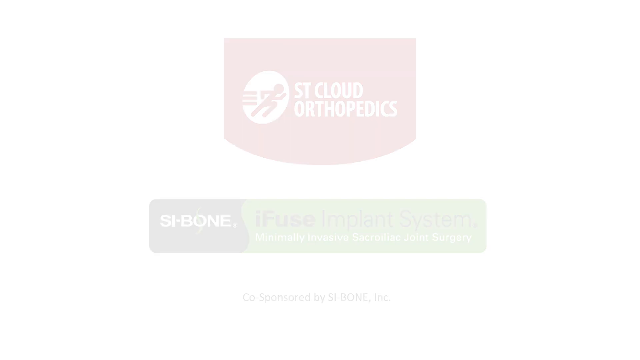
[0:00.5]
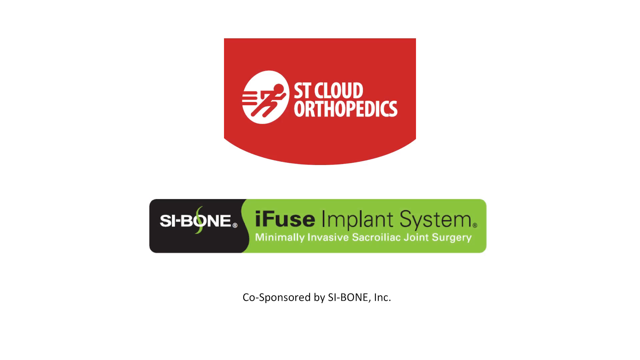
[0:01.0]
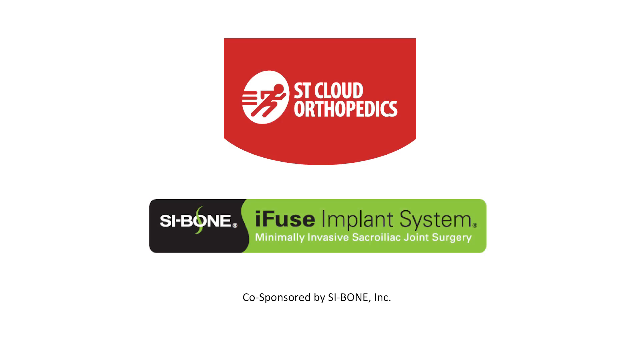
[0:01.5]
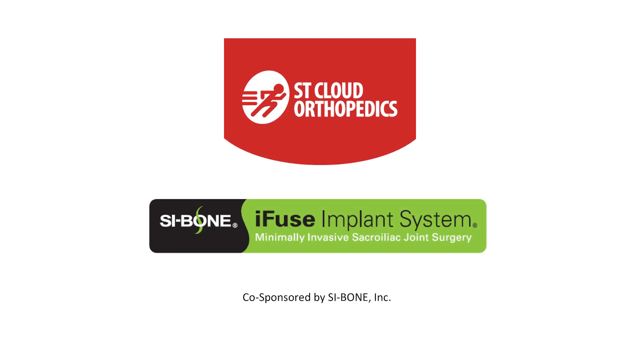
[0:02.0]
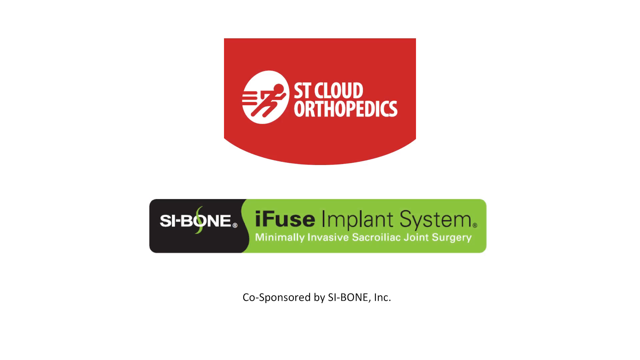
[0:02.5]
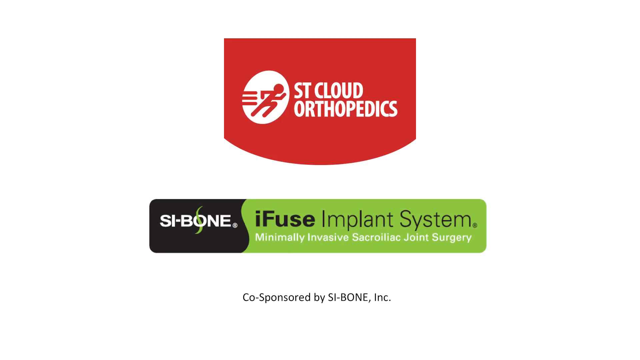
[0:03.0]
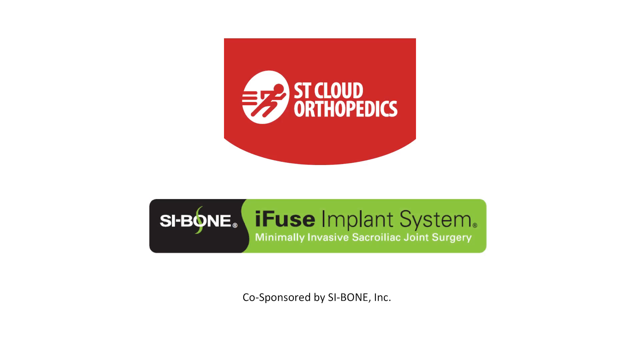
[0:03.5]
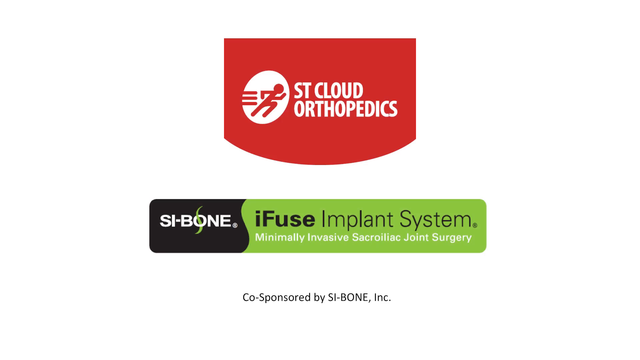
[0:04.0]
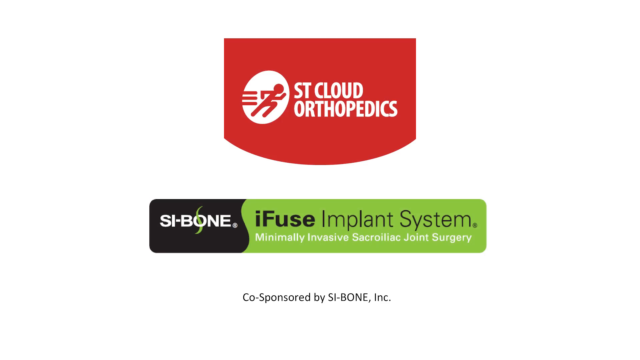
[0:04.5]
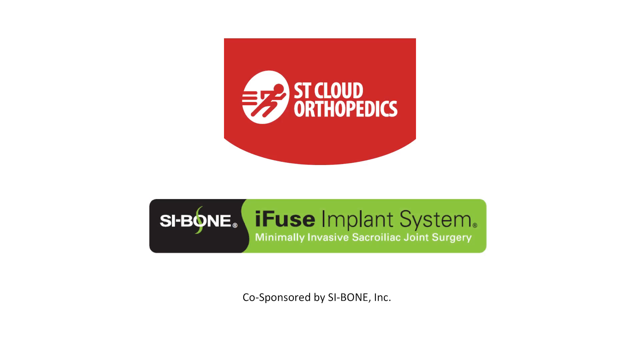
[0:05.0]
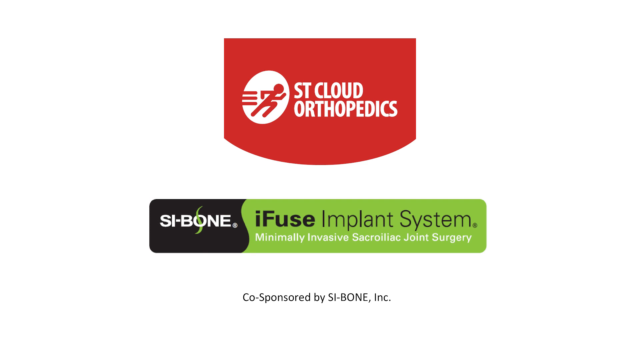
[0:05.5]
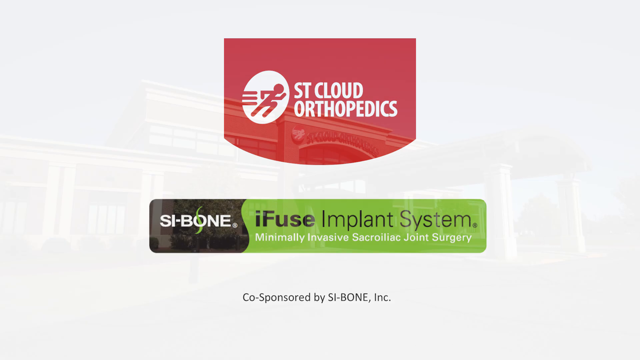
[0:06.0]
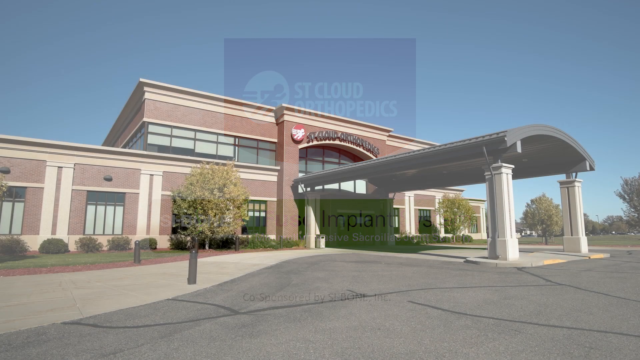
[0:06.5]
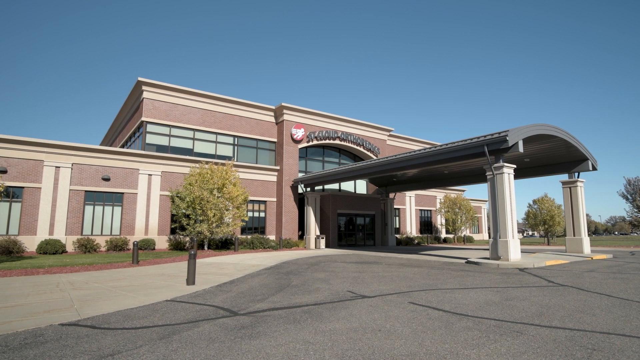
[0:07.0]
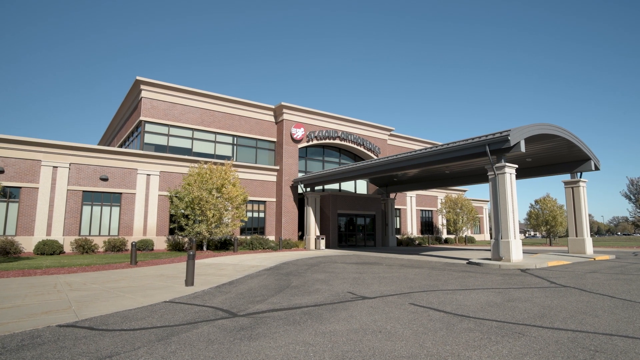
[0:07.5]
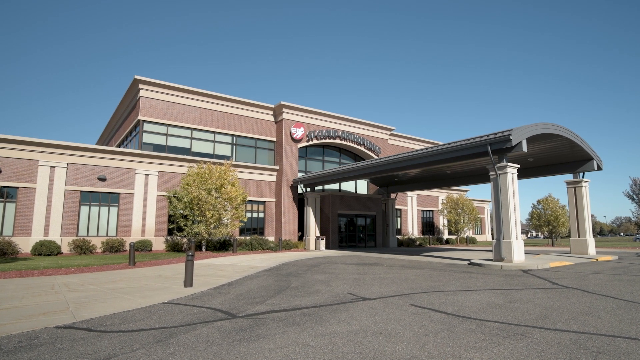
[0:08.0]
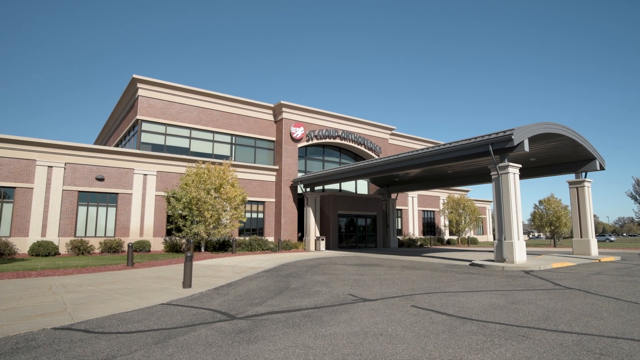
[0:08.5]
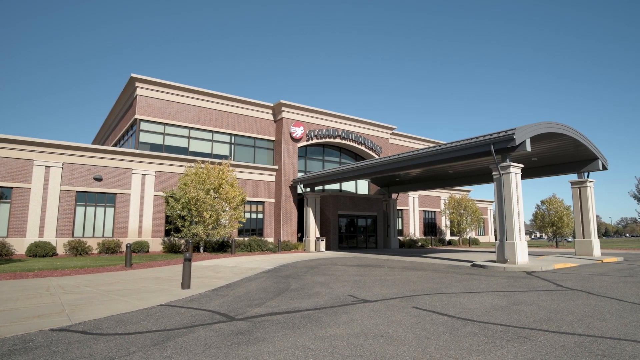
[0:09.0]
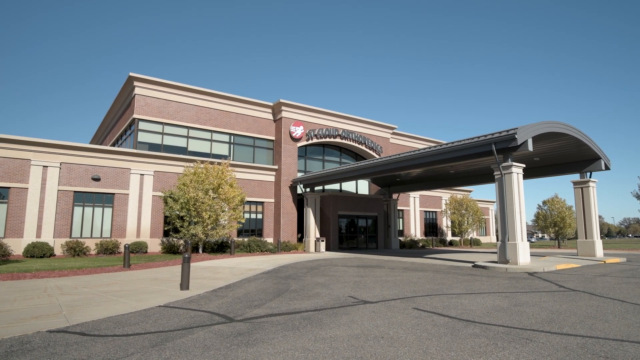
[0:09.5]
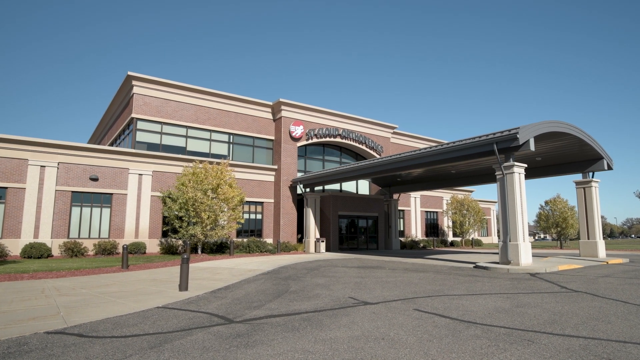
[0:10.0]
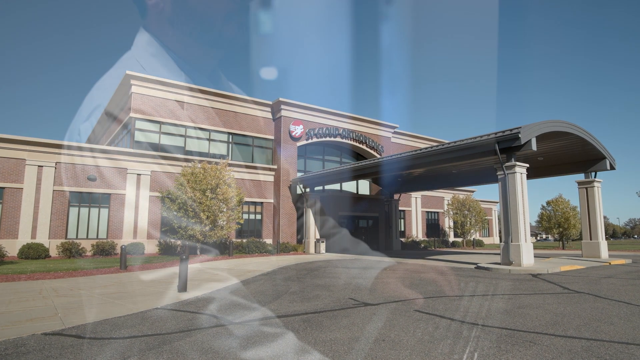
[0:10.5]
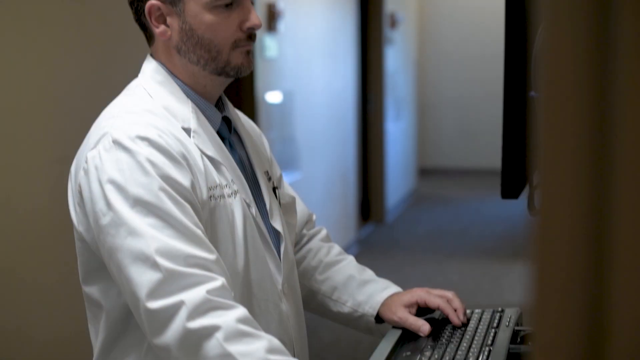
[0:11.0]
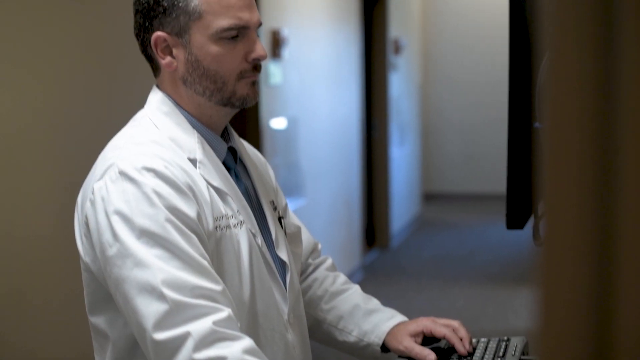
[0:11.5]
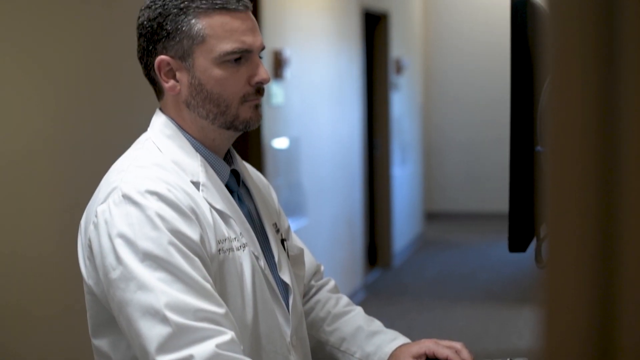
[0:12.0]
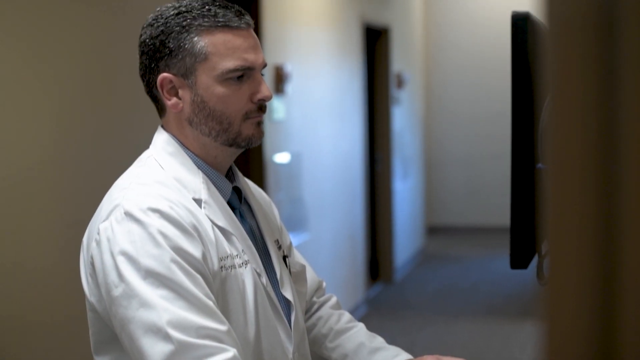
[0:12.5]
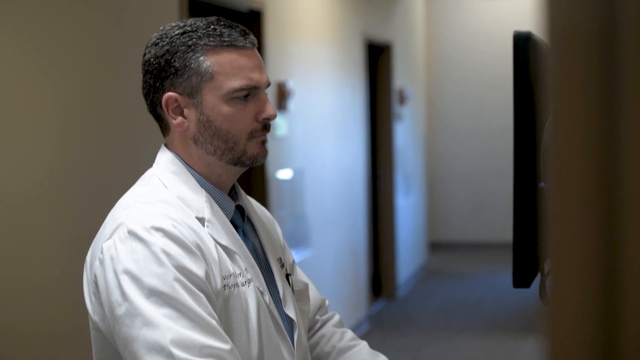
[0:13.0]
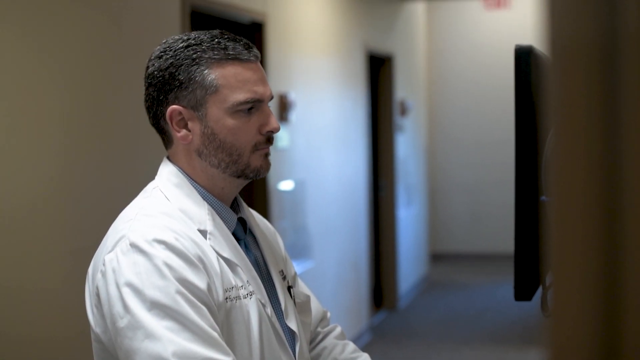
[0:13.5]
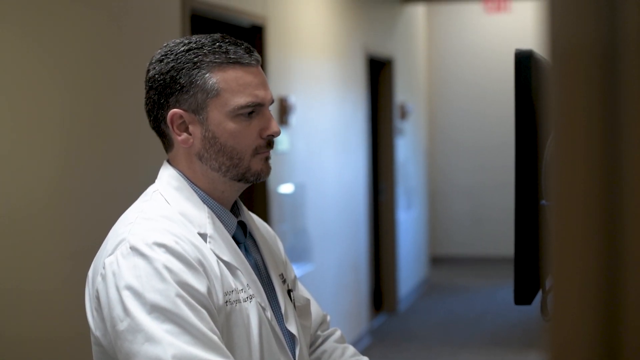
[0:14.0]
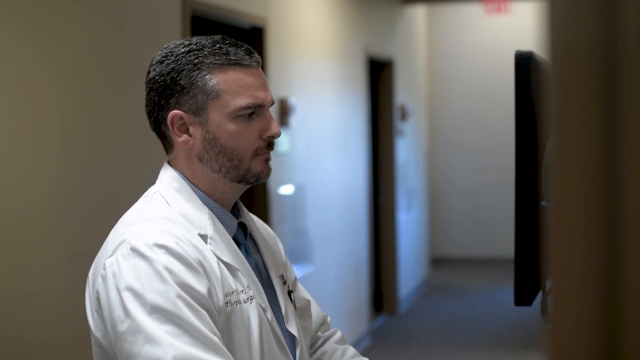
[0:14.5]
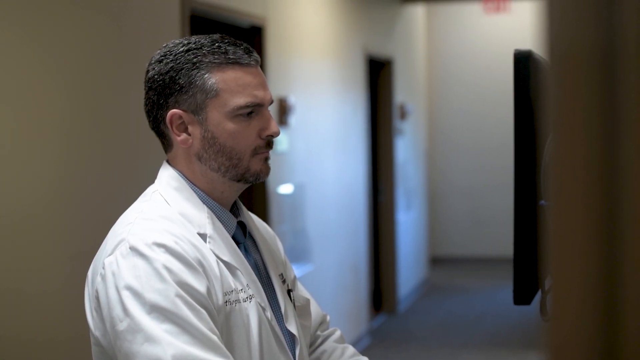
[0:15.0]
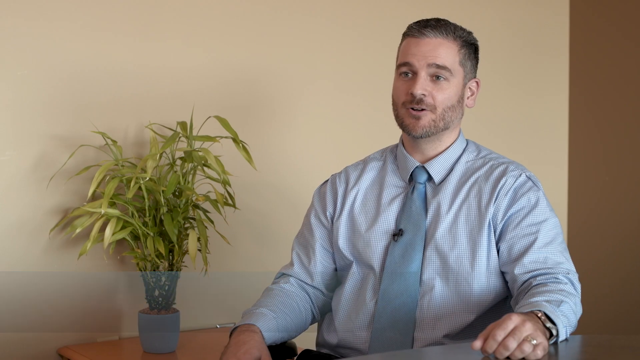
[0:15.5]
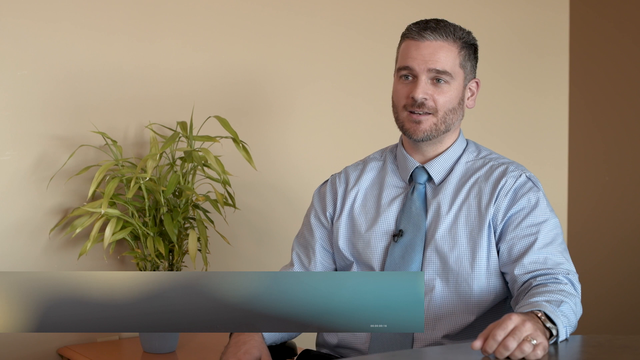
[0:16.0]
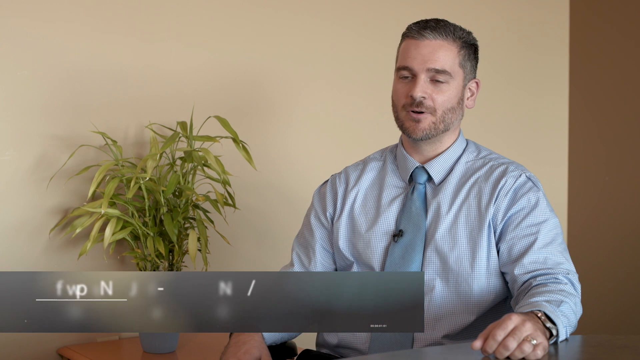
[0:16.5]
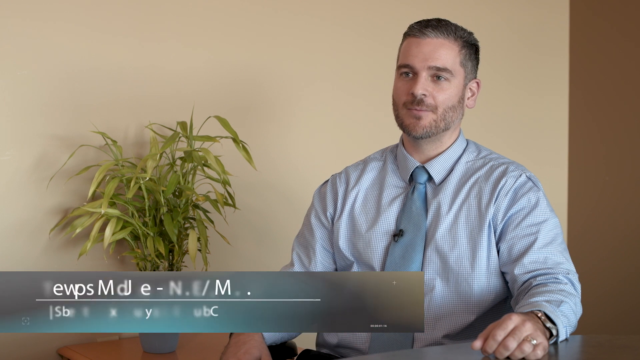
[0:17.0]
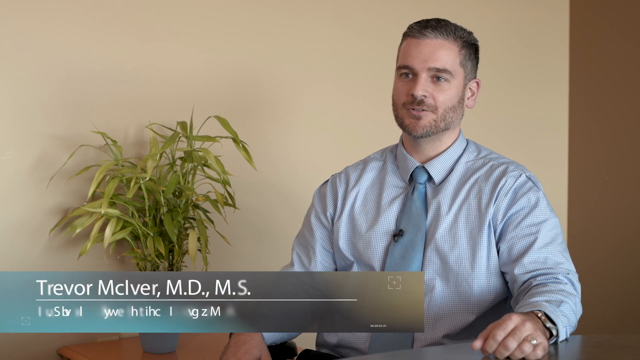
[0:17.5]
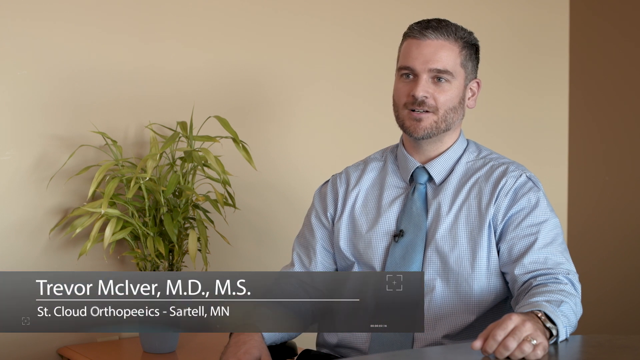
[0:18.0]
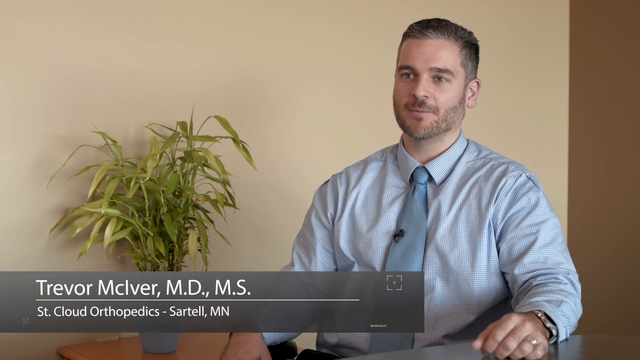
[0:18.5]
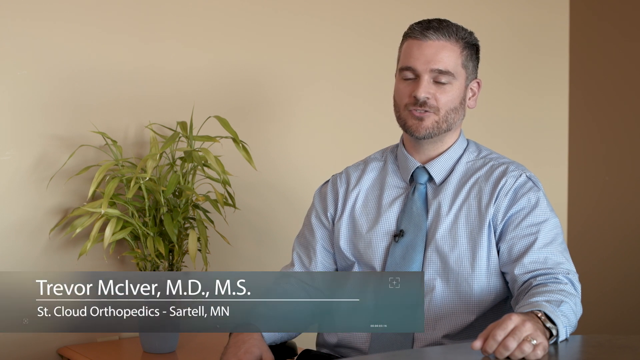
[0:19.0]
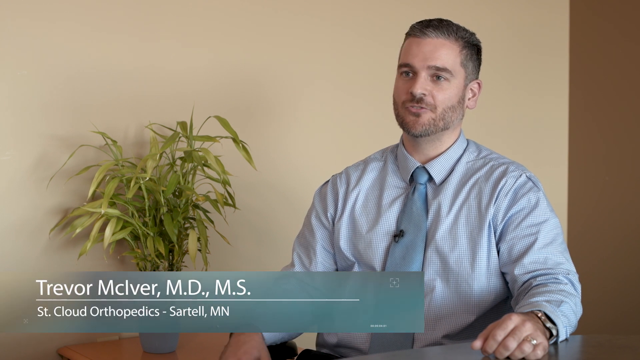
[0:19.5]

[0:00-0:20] The video opens on a white background with what is almost a red rectangle at the top reading "ST" (unclear whether Street or St. Cloud), with "orthopedics" in white underneath. At the bottom is a rectangle whose left side is black and right side is green. The black part says "SI" with a dashed bone, and the green side reads "iFuse implant system" in black, with "minimally invasive joint surgery" in white underneath. Below the rectangle, in black, text reads "sponsored by SI-BONE, Inc." The title stays up, and then a building appears, apparently the business that was listed. A doctor is then shown looking at a monitor. He has black hair that looks like it is slightly turning gray, fair skin, a blue tie, and a collared shirt that is mostly blue, possibly blue and white, and he wears a white doctor's coat. The same doctor is then shown talking in a different position, in the same clothes but without the lab coat. A green plant is on his left, and the background is beige on the left side and brown on the other. On-screen text gives his name as "Trevor" followed by "MCLVER, MD, MS" and "cloud orthopedics - SARTELL".